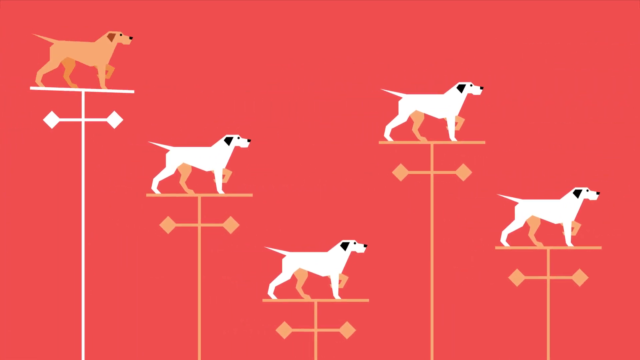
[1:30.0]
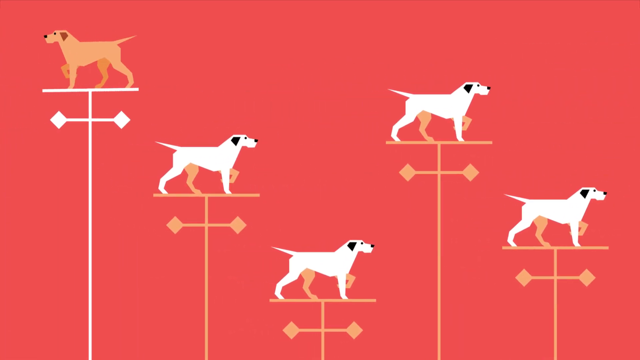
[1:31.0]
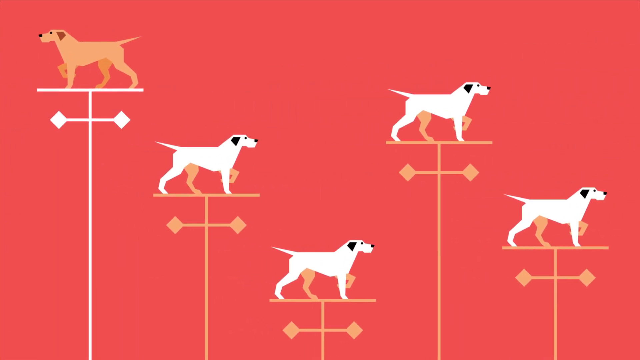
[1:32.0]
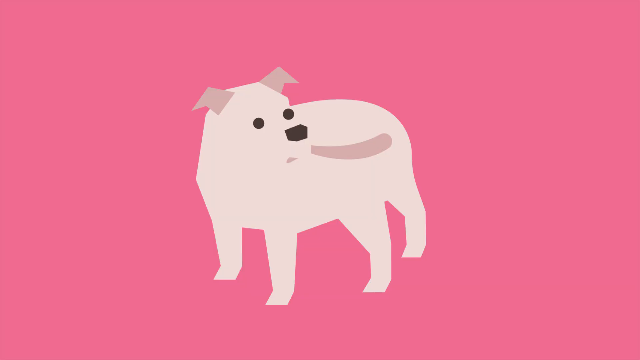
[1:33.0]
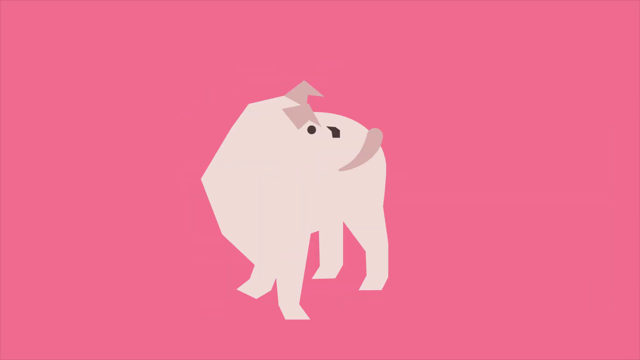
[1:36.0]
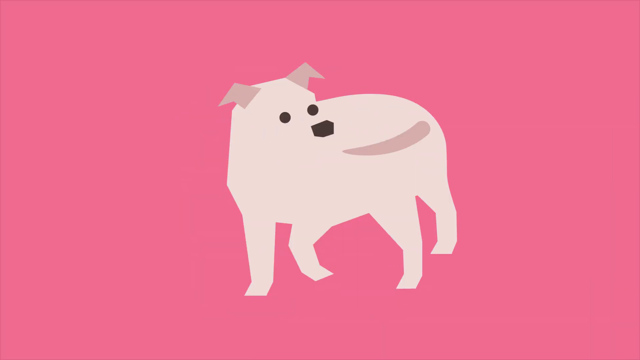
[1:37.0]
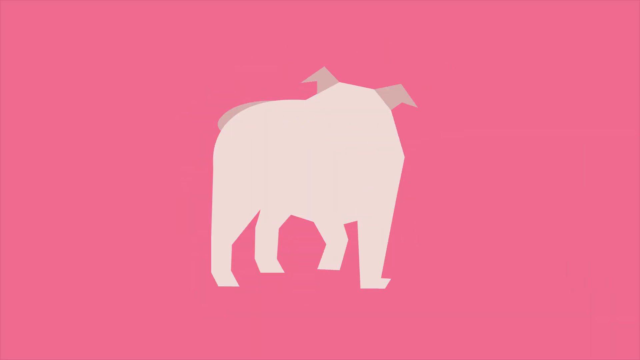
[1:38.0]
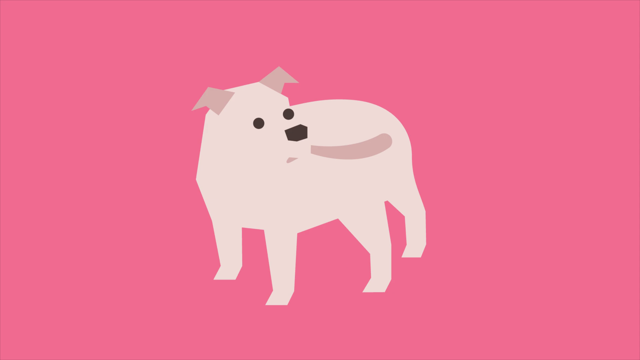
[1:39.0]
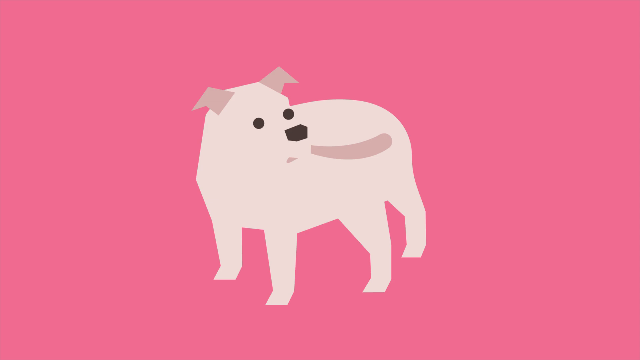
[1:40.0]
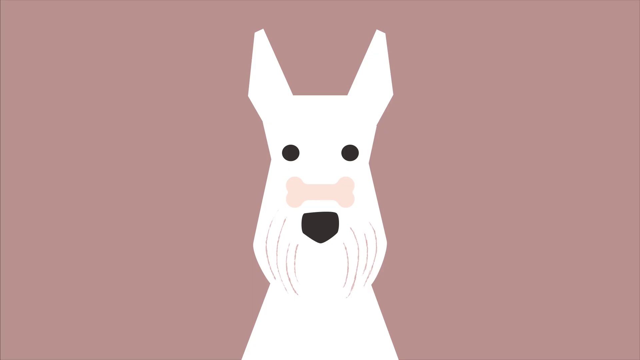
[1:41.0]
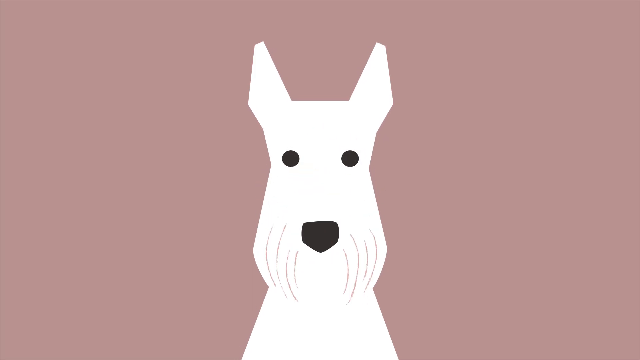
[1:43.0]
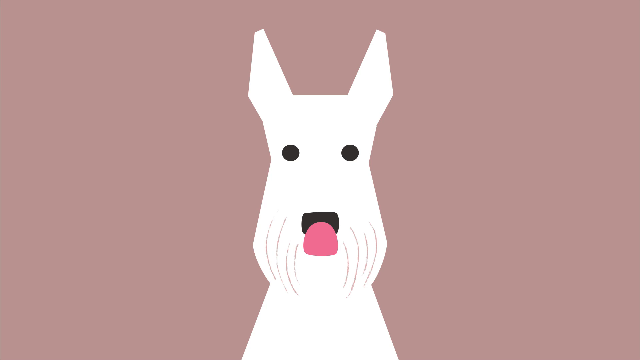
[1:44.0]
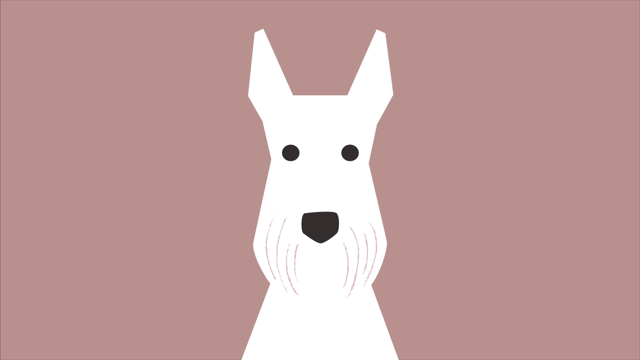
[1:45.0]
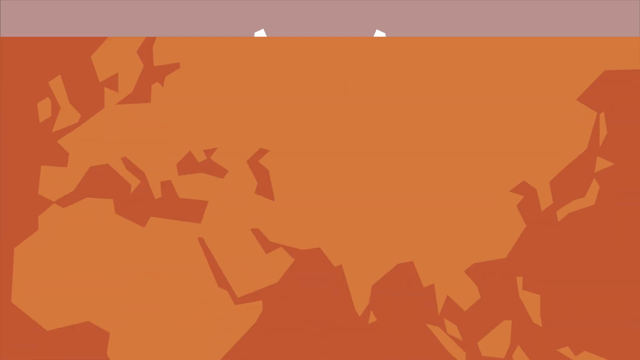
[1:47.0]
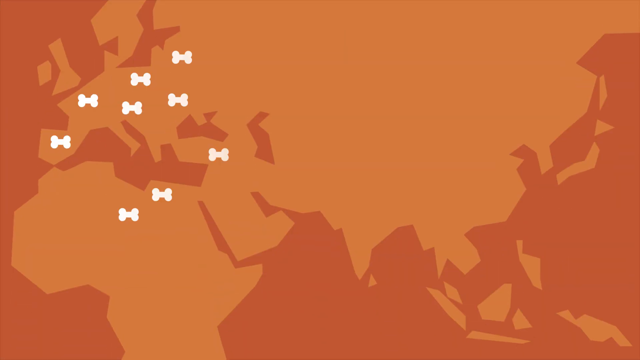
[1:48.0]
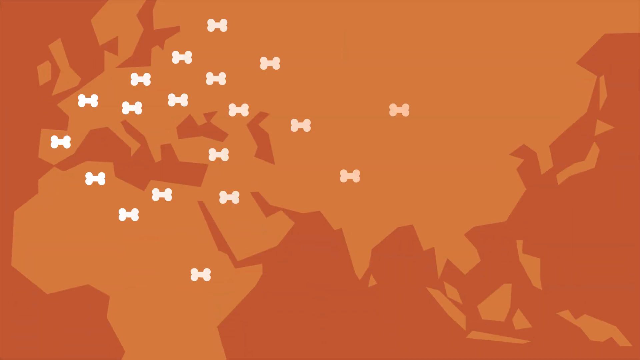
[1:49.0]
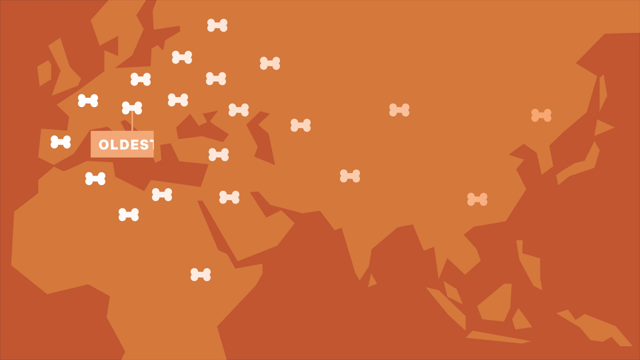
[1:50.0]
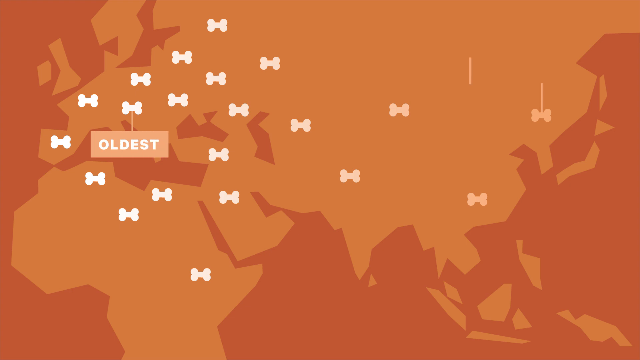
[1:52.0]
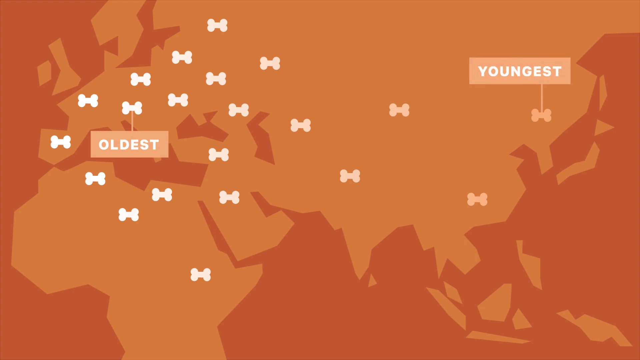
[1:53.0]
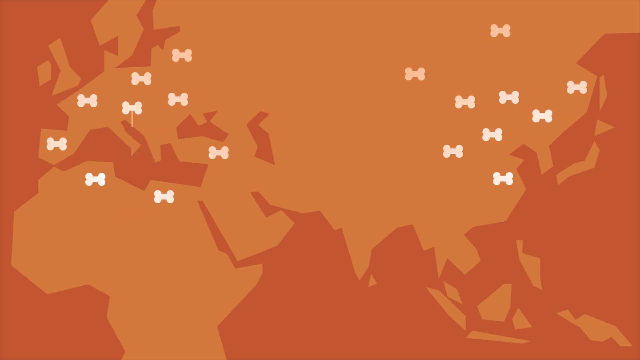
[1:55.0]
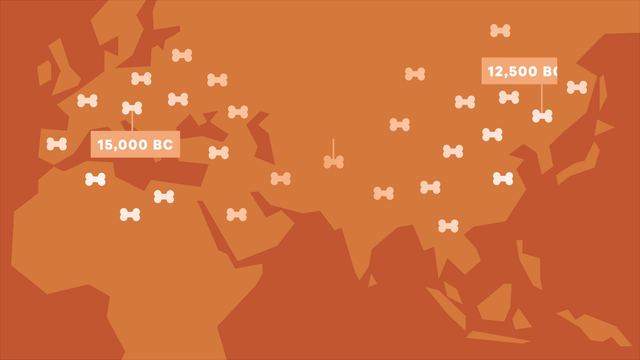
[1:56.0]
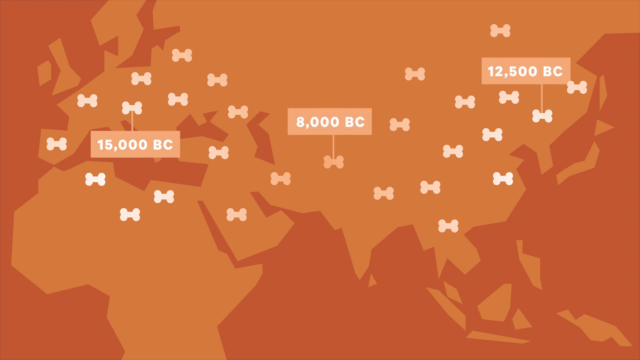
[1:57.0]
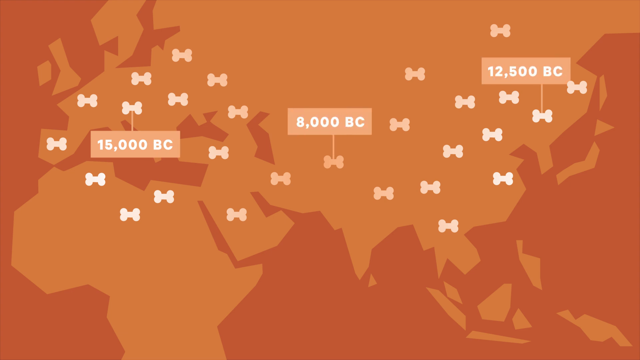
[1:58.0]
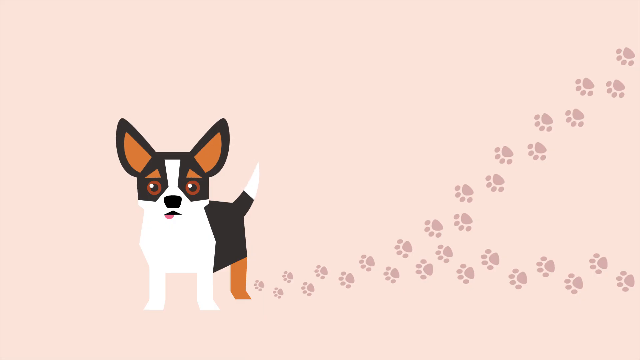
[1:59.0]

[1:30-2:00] A number of dog wind indicators are in the center of the screen in front of a bright red background. One of them, a tan-colored dog, spins around, while the others are white. The scene changes to a short-haired white dog biting its own tail in front of a pink background; its ears are somewhat floppy and it is turned, looking back toward its tail, as it spins in circles chasing it. Next, a terrier-style dog with white fur is in front of a light brown background, looking toward the screen as it stands with a treat on its nose. It launches the treat into the air, grabs it, and licks its lips as the camera focuses on it. The scene changes to an illustration of Africa, Europe and Asia, where a series of bone markers appear from the left of the screen to the right, covering portions of the three continents, with an indicator of the oldest bone on the left in Europe and the youngest bone on the right in Asia. As more bones fill in, the illustration resets and shows a series of dates: "15,000 BC" at the far left toward Europe, "8,000 BC" at the center over the Middle East, and "12,500 BC" at the far right around China. The scene then changes to a dog at the center of the screen with a number of paw marks.